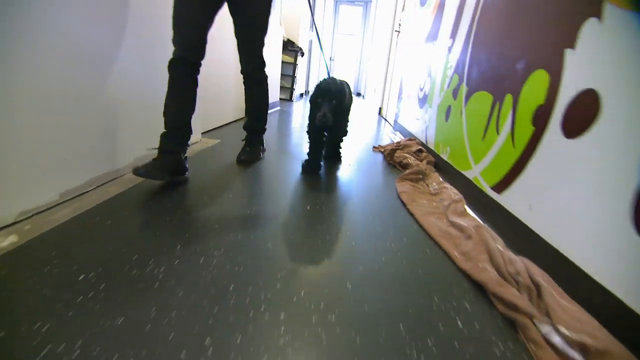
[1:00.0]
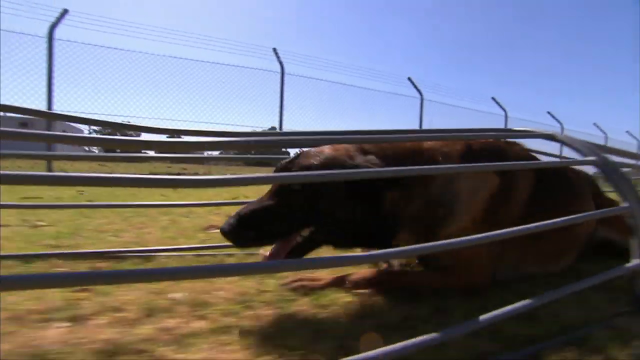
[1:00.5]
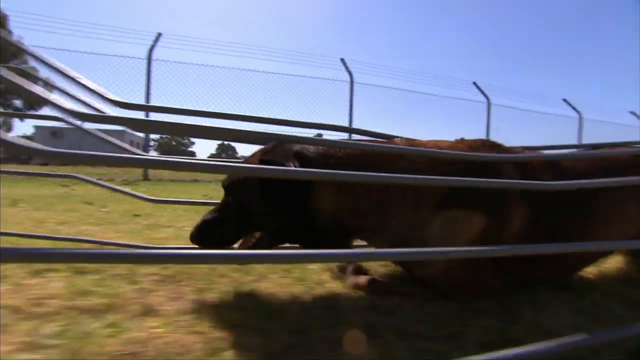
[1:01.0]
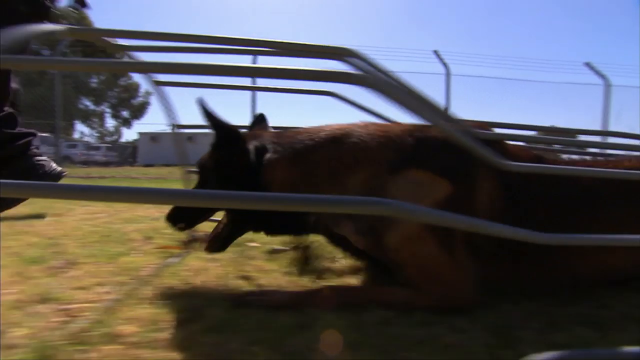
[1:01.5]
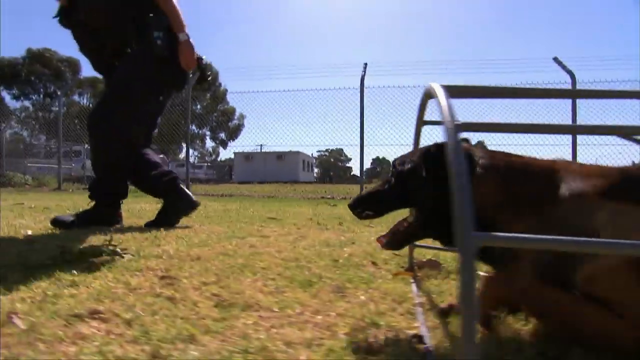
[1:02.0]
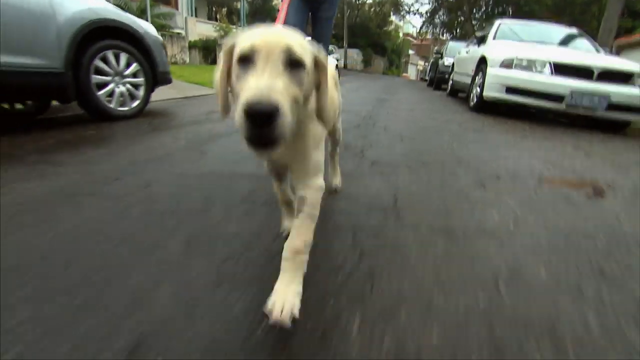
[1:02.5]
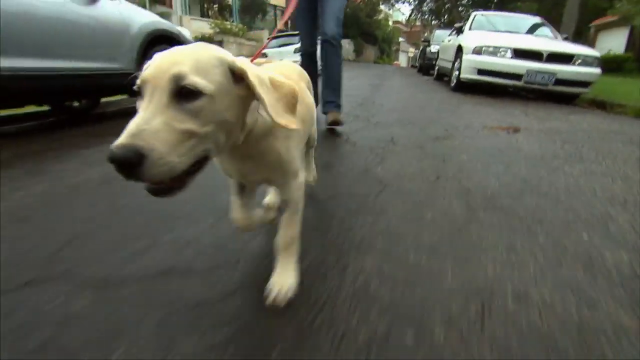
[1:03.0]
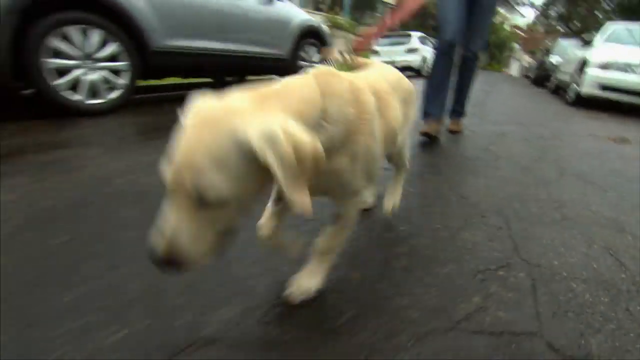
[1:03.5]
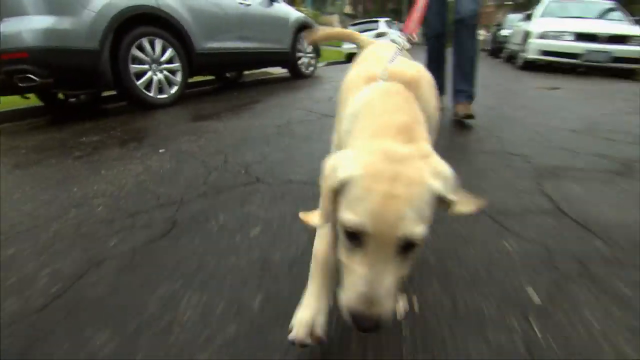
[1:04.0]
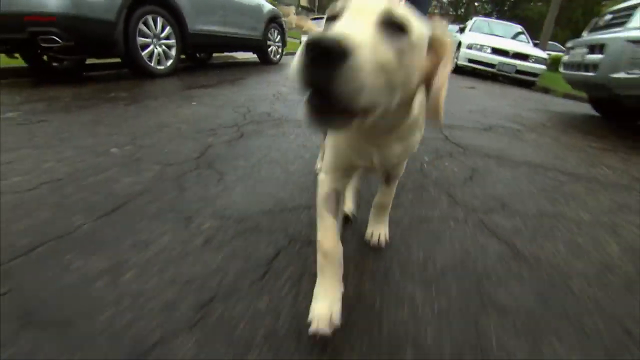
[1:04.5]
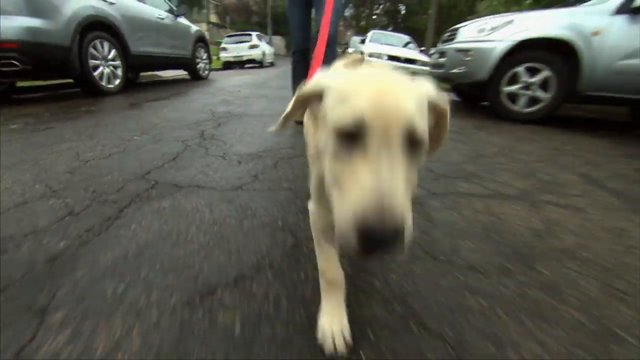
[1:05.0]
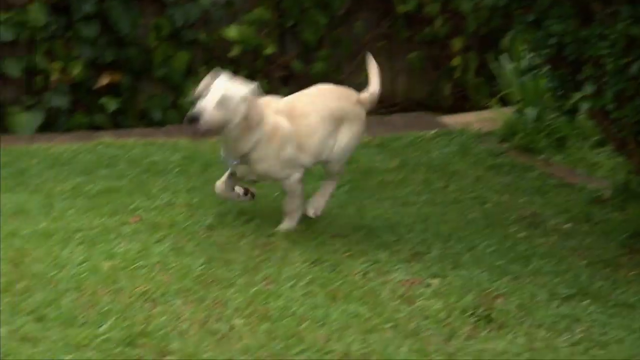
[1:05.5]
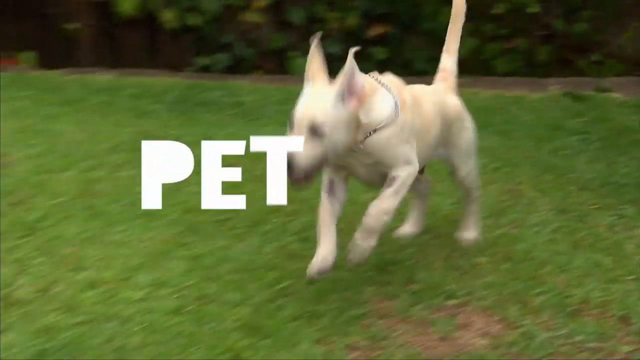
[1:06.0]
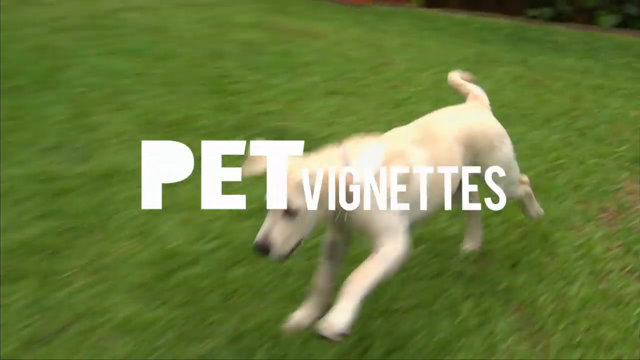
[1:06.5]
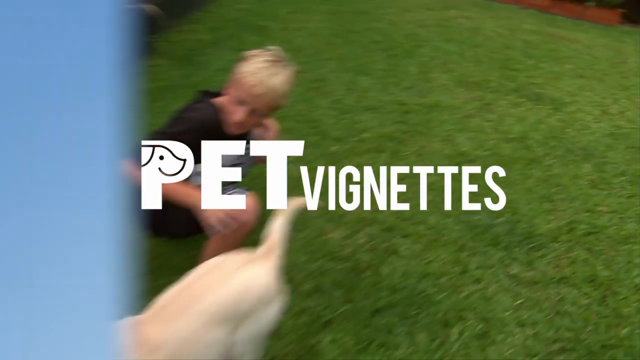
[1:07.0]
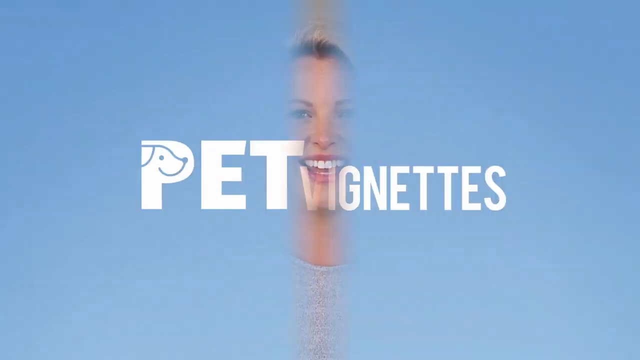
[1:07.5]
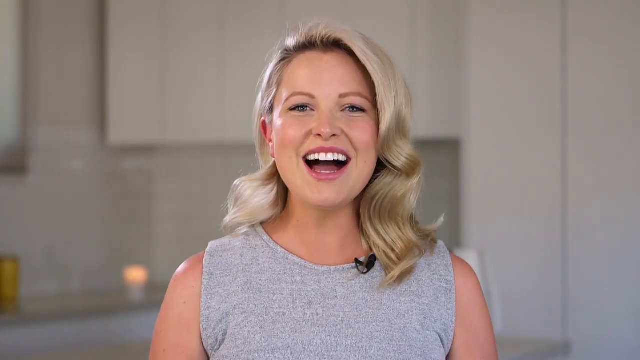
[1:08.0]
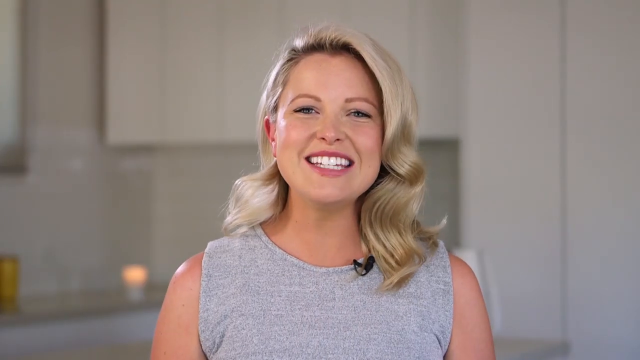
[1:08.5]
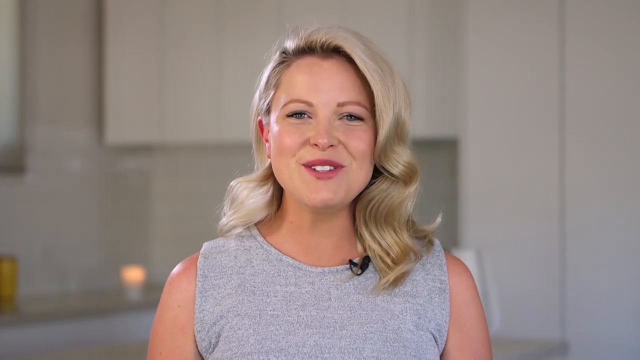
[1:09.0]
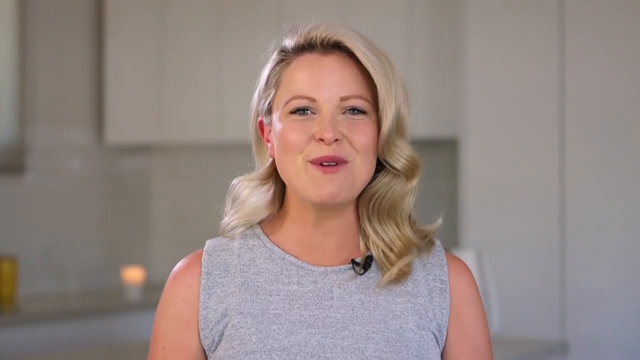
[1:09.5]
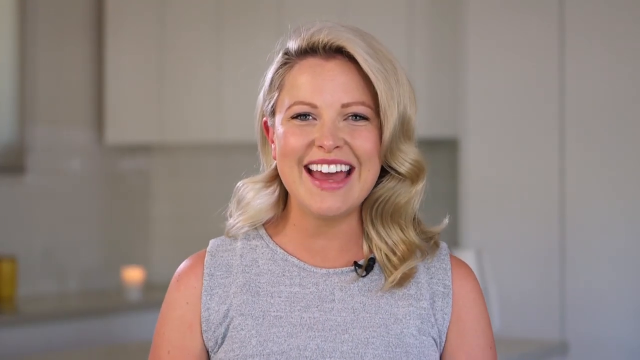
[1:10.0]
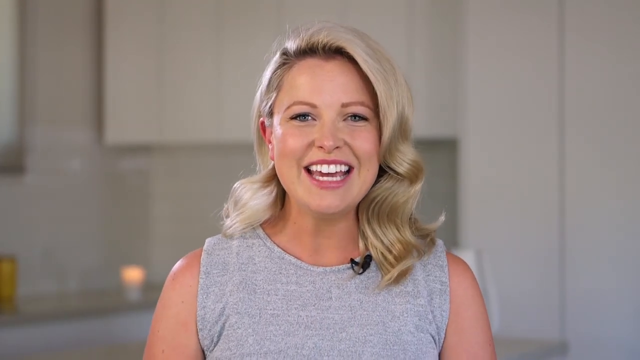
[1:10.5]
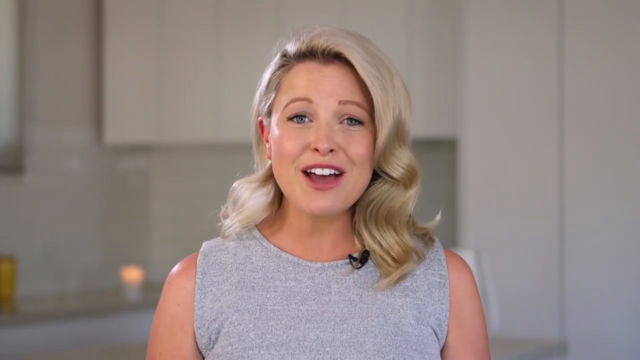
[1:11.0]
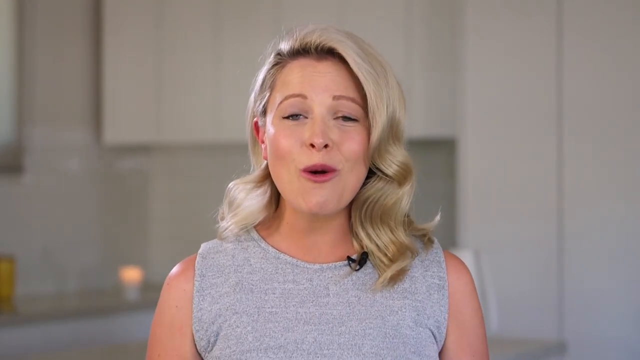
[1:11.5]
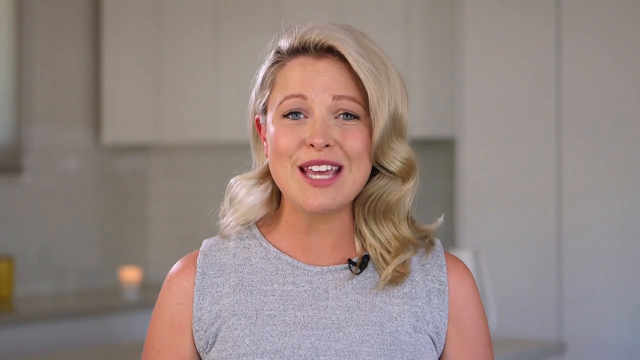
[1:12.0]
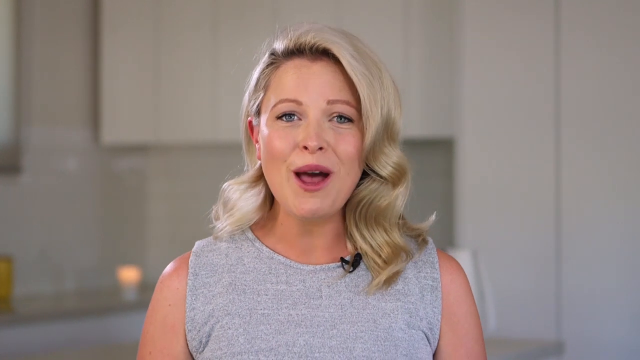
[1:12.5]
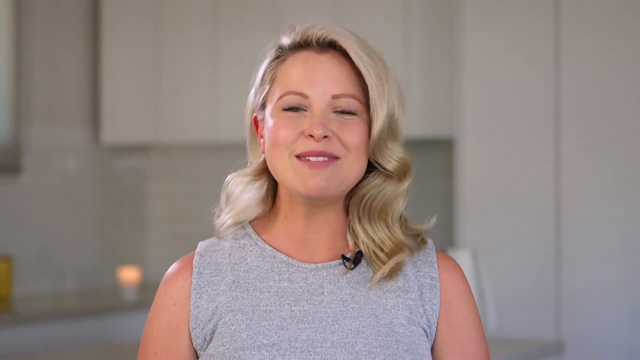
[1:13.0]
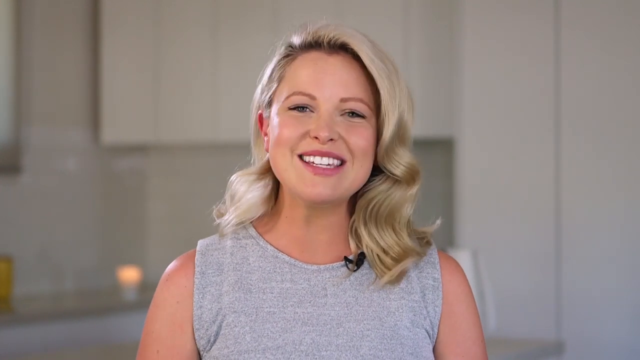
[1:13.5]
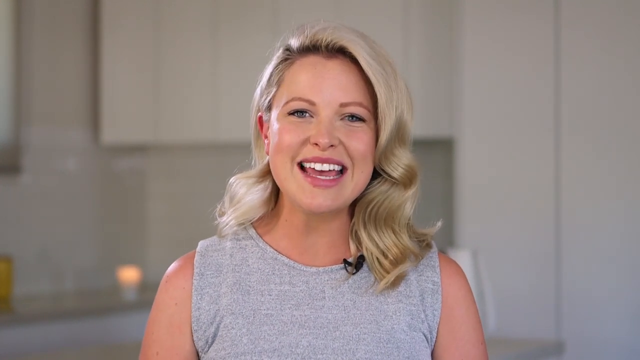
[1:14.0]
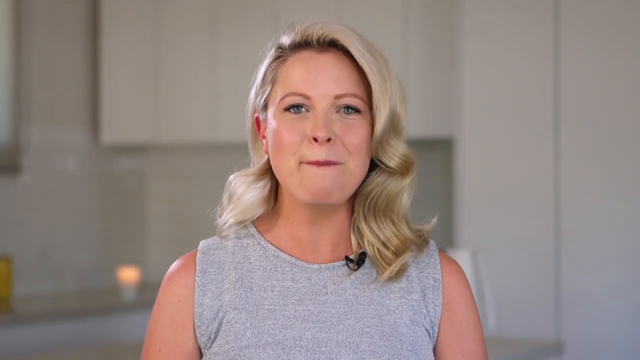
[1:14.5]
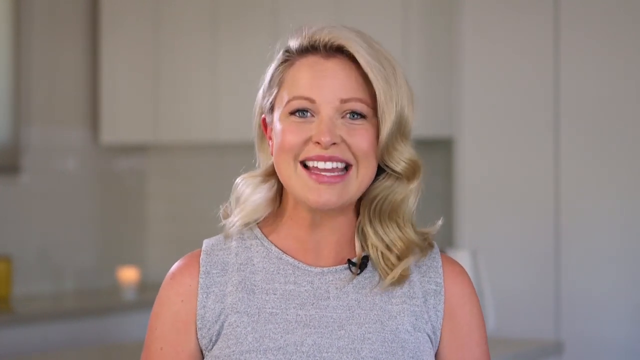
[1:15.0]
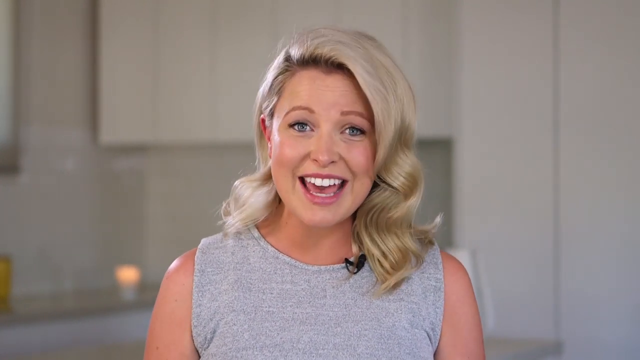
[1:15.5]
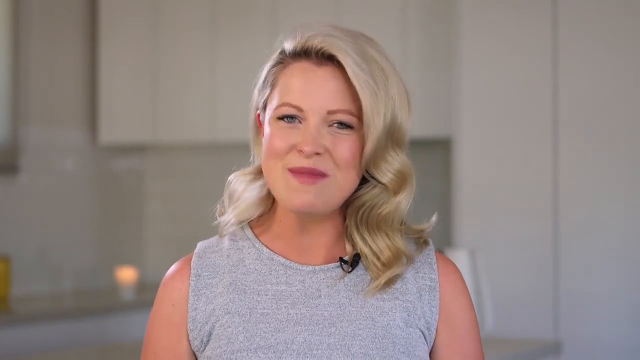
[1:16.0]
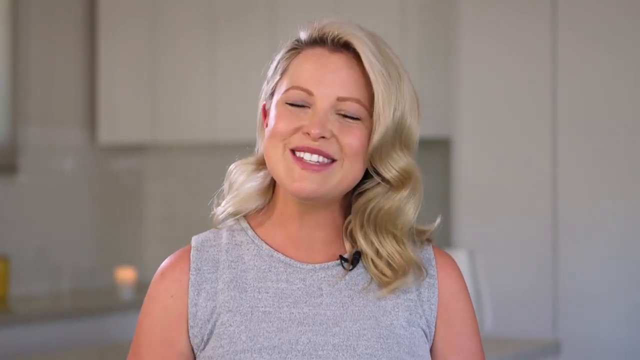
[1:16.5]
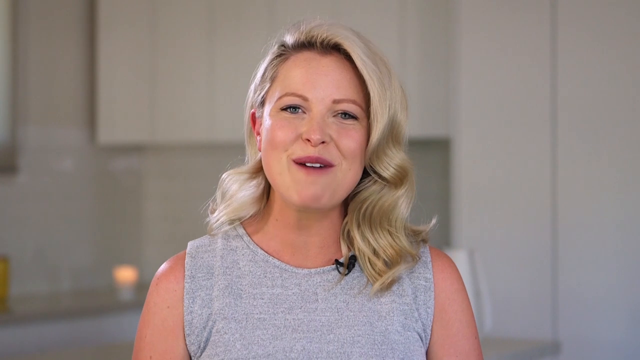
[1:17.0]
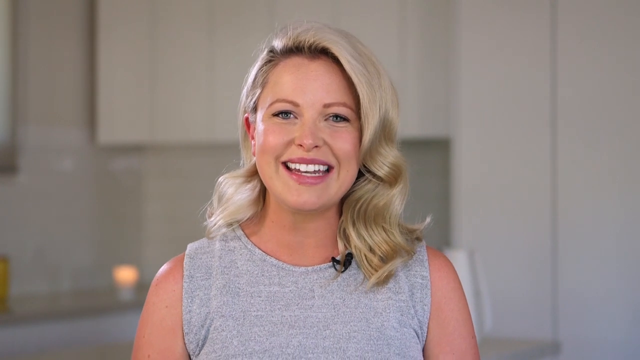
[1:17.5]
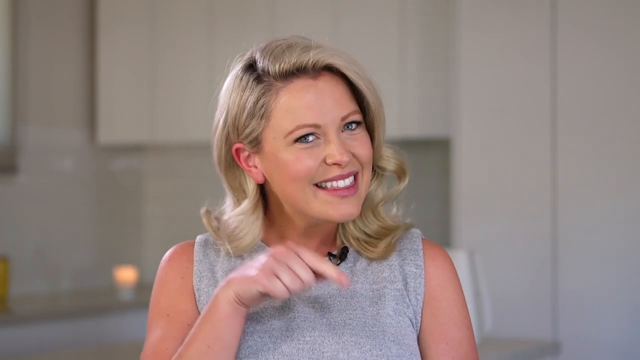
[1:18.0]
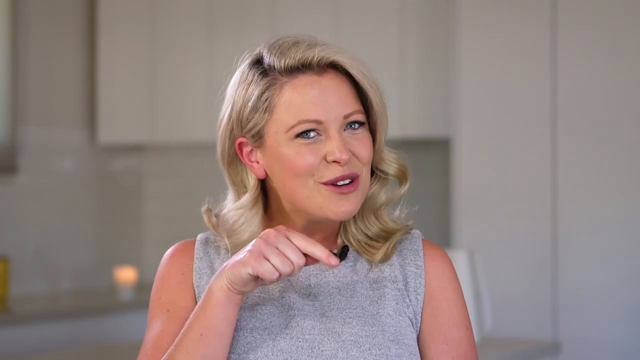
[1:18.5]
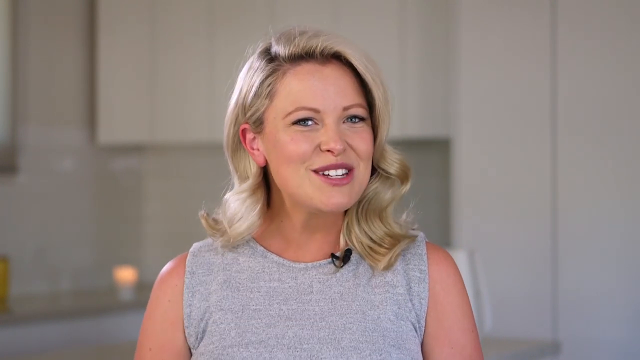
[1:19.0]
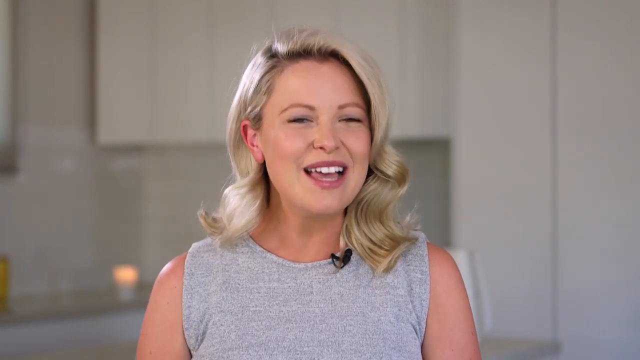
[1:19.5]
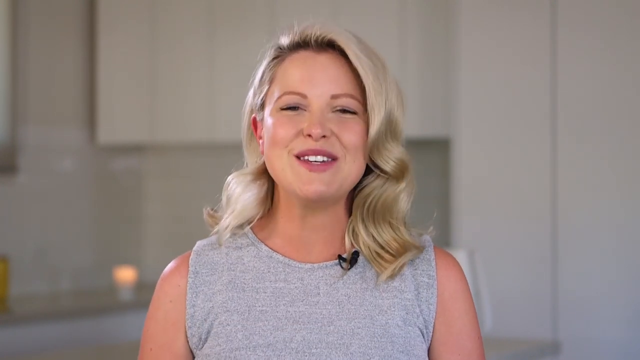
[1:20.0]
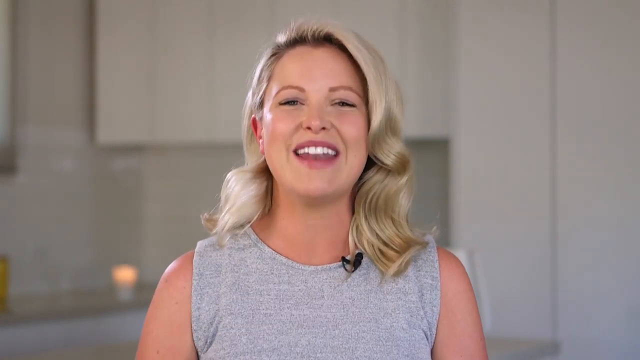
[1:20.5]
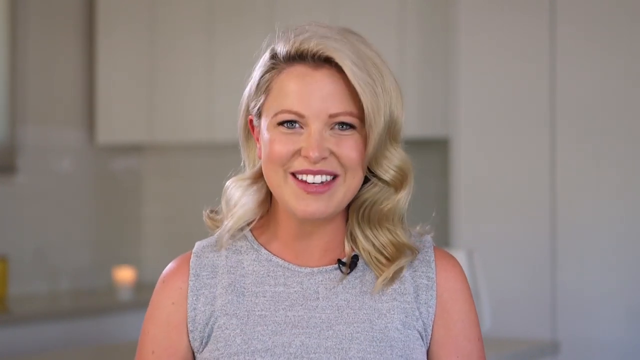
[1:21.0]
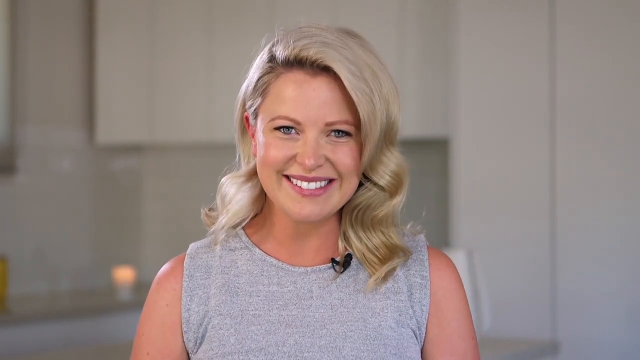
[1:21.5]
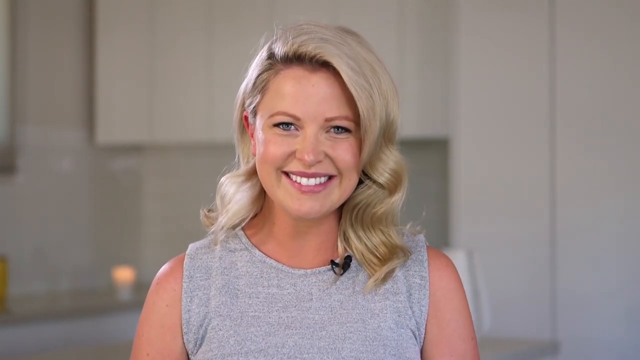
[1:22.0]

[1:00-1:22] A man trains his dog. A woman with blonde hair, wearing a grey top, is explaining about dogs. Some people take their dogs out for a walk, and others take their dogs to train them.